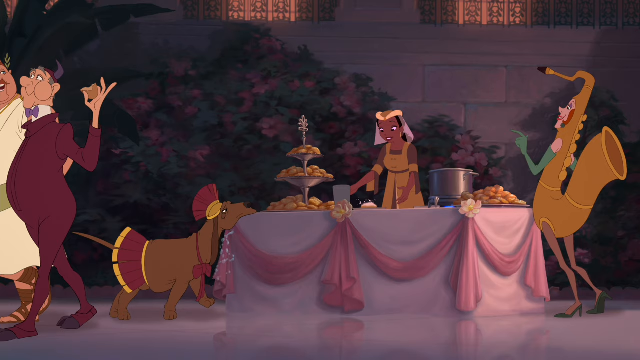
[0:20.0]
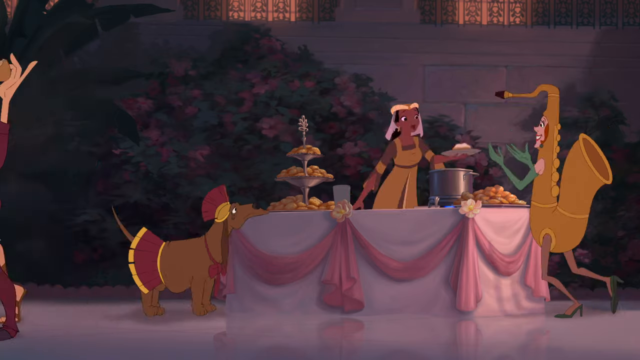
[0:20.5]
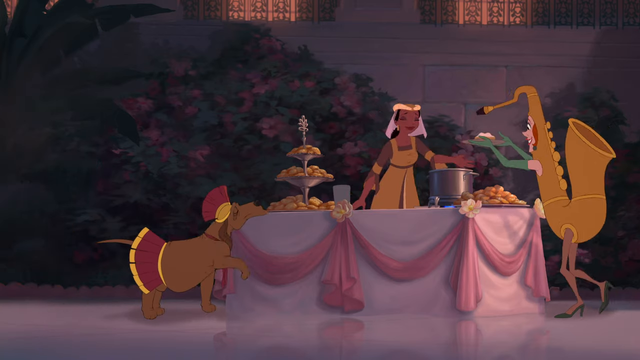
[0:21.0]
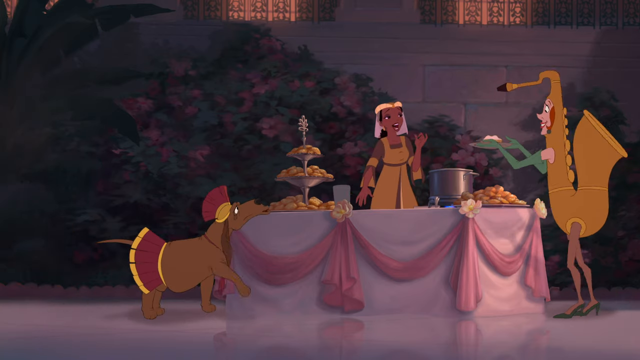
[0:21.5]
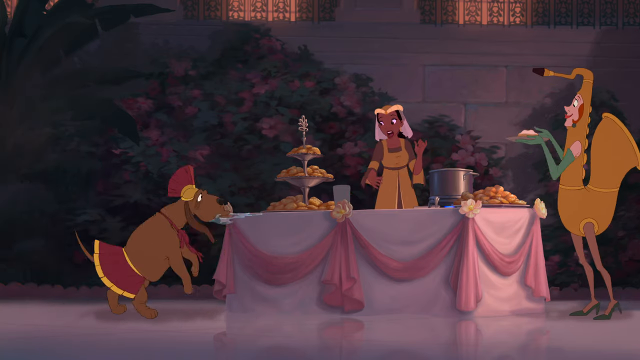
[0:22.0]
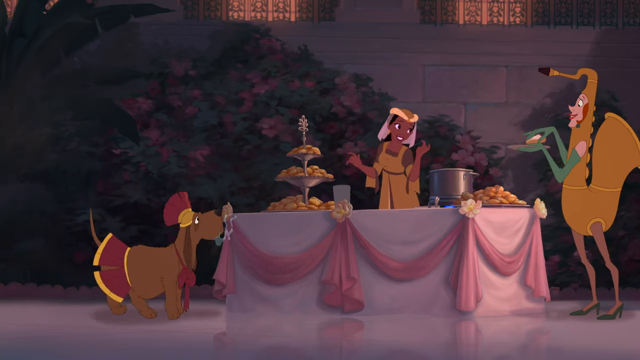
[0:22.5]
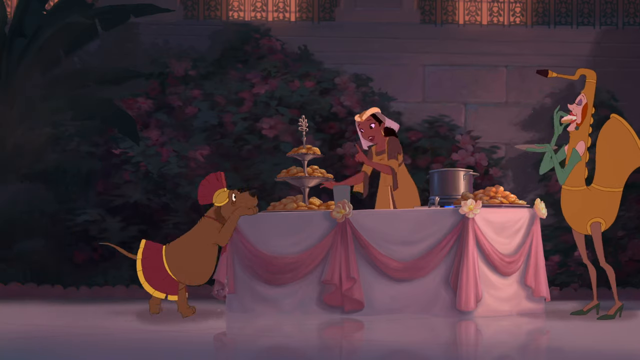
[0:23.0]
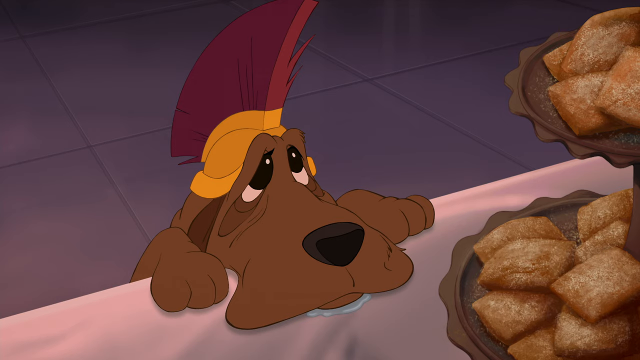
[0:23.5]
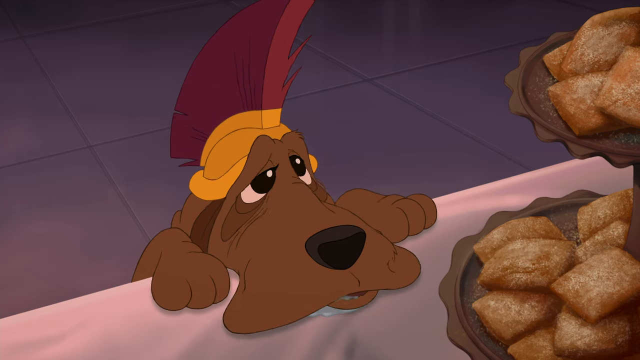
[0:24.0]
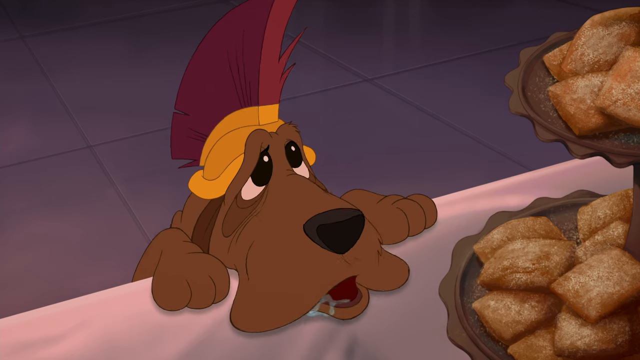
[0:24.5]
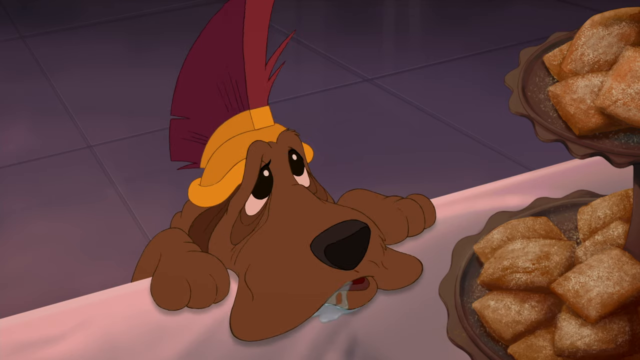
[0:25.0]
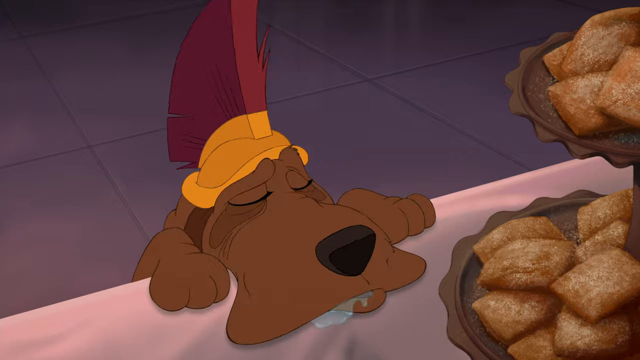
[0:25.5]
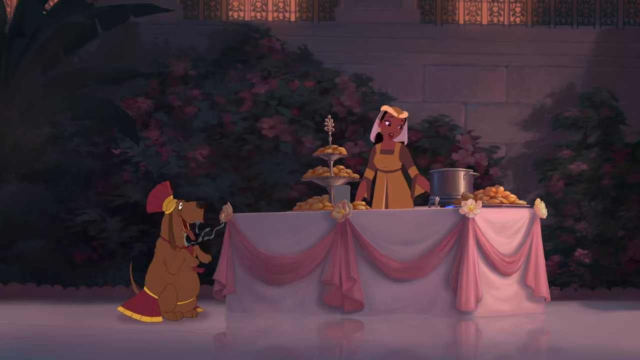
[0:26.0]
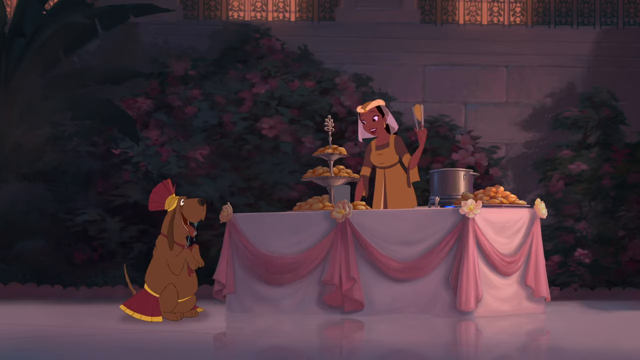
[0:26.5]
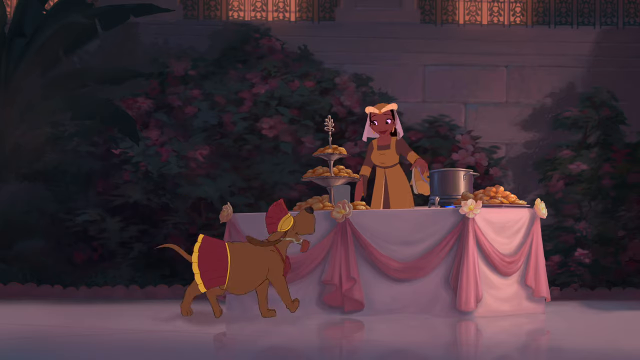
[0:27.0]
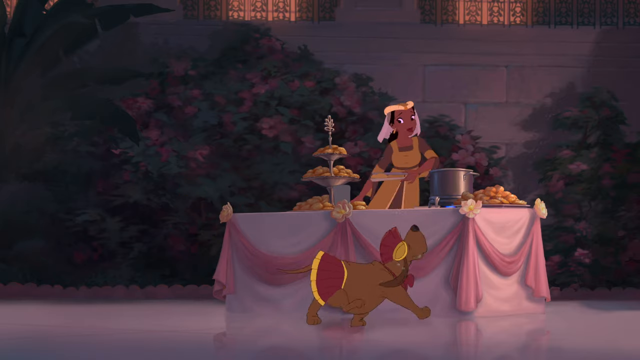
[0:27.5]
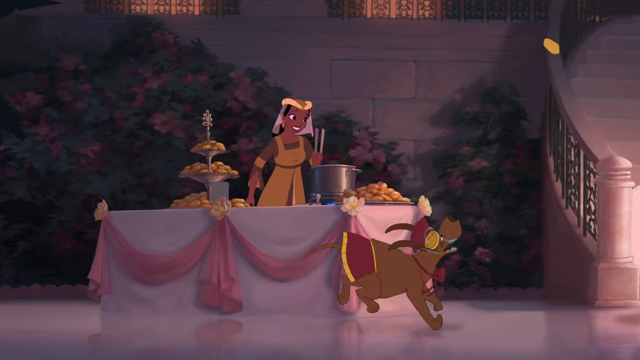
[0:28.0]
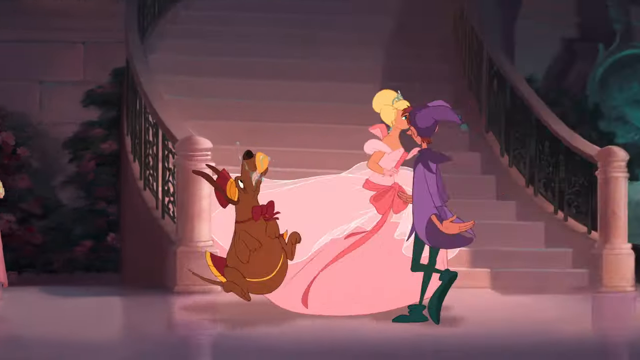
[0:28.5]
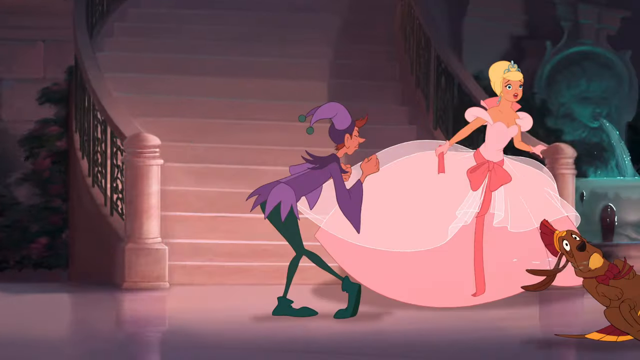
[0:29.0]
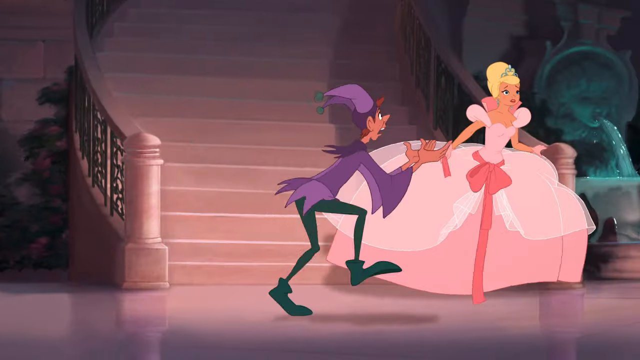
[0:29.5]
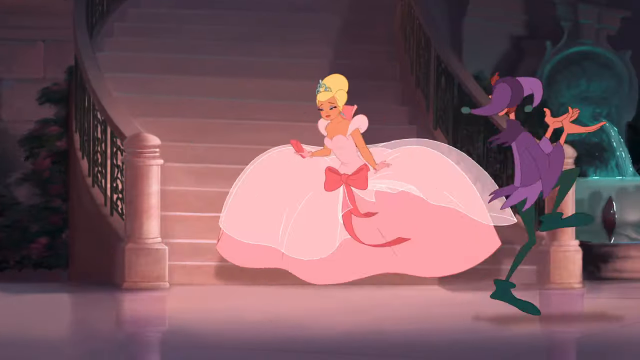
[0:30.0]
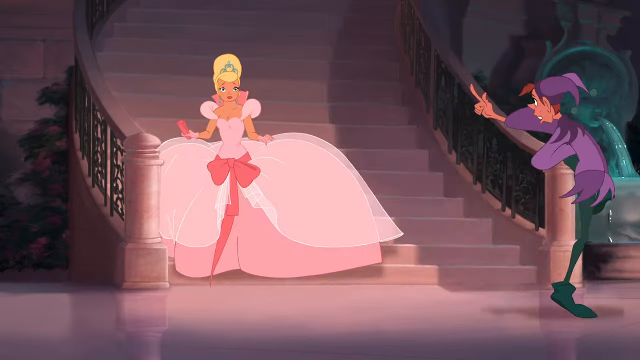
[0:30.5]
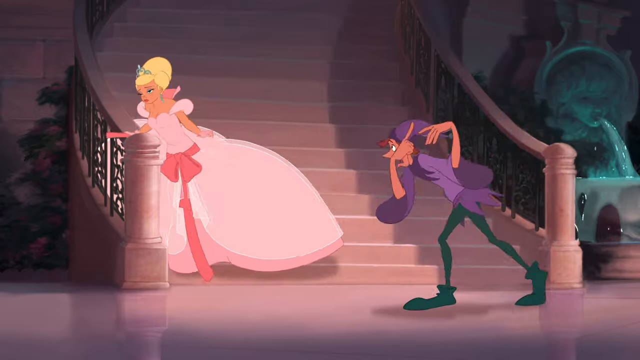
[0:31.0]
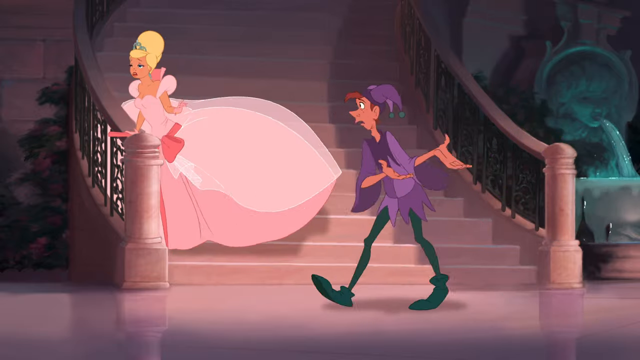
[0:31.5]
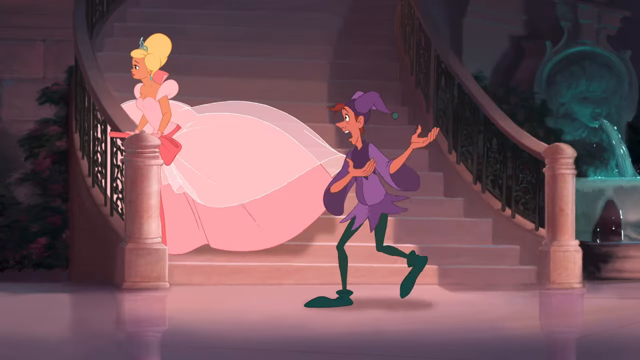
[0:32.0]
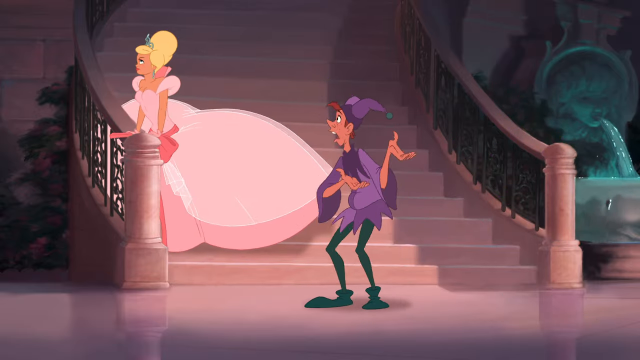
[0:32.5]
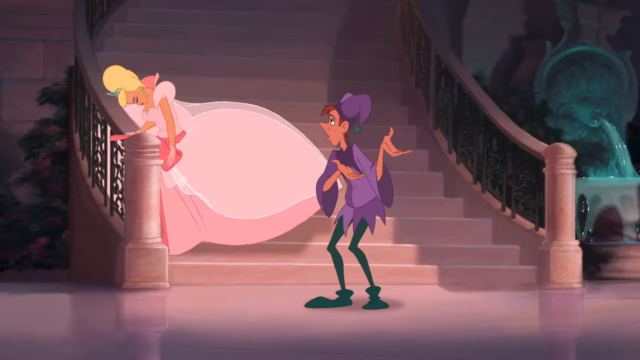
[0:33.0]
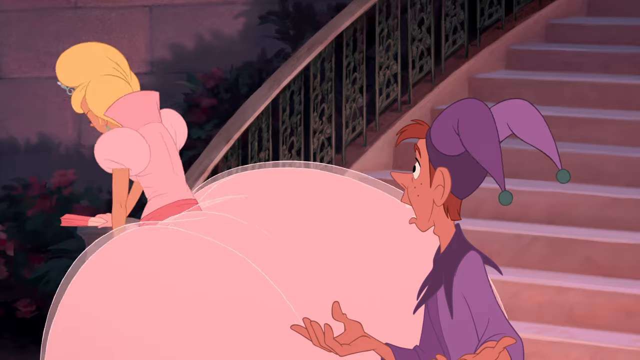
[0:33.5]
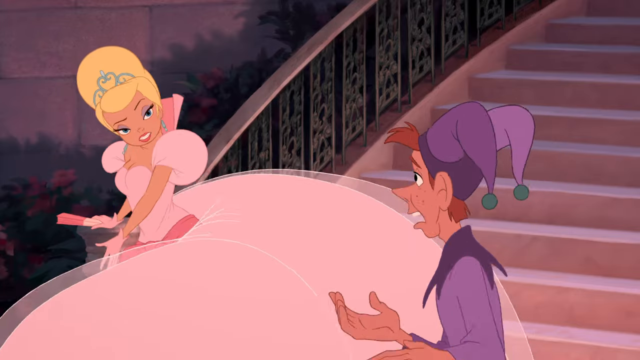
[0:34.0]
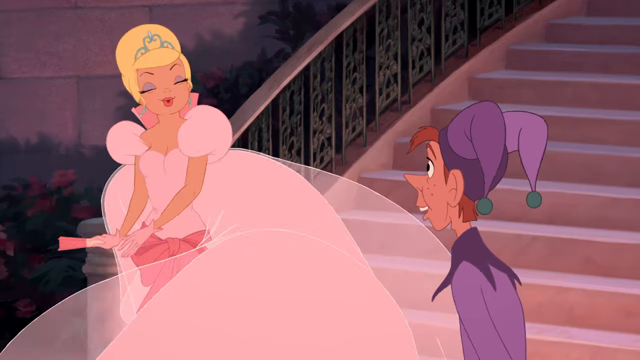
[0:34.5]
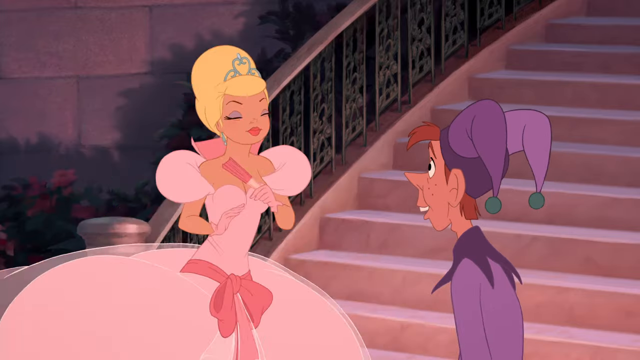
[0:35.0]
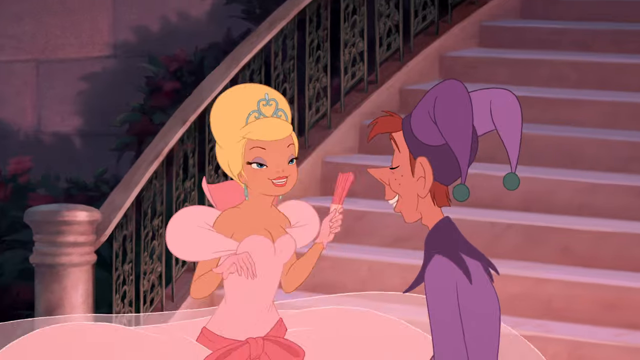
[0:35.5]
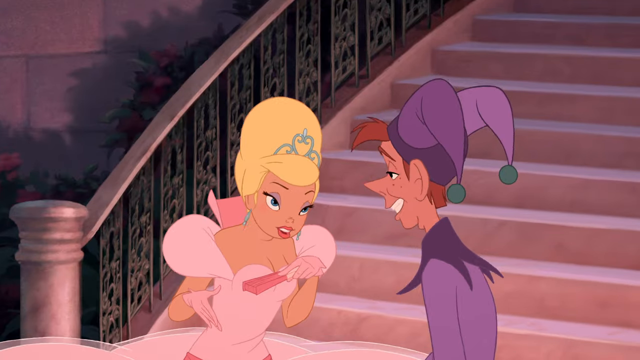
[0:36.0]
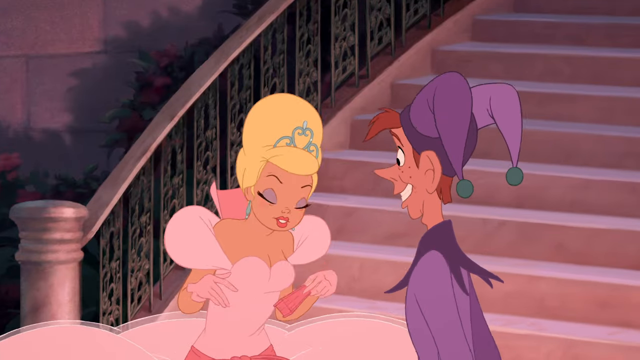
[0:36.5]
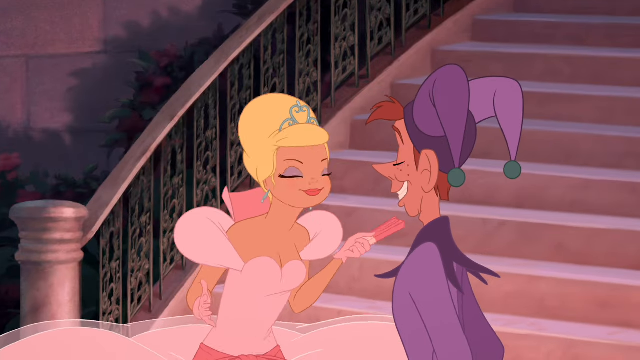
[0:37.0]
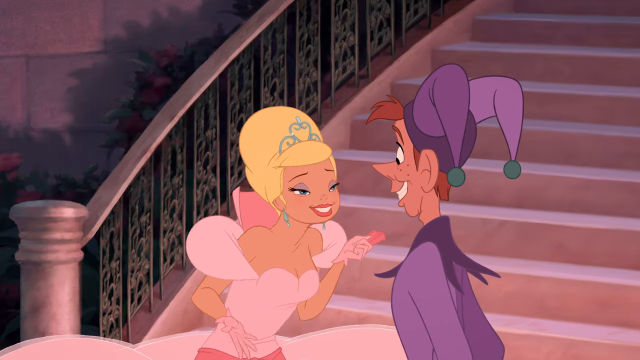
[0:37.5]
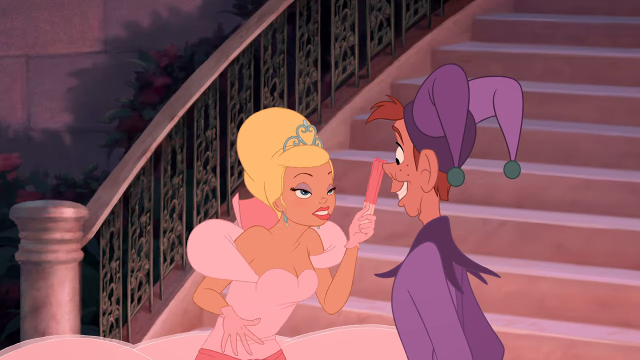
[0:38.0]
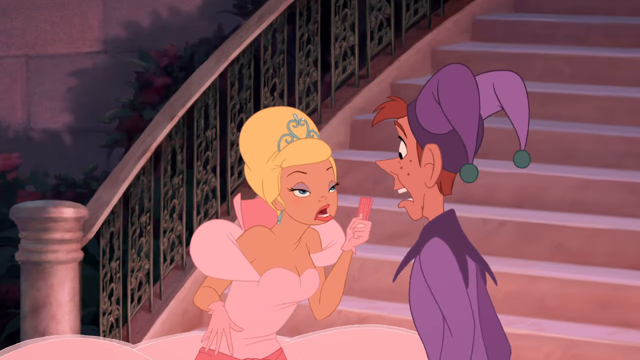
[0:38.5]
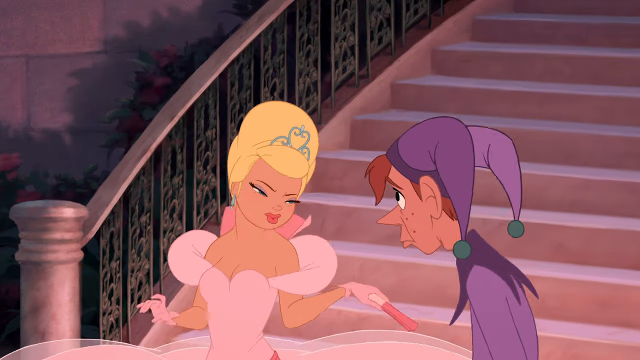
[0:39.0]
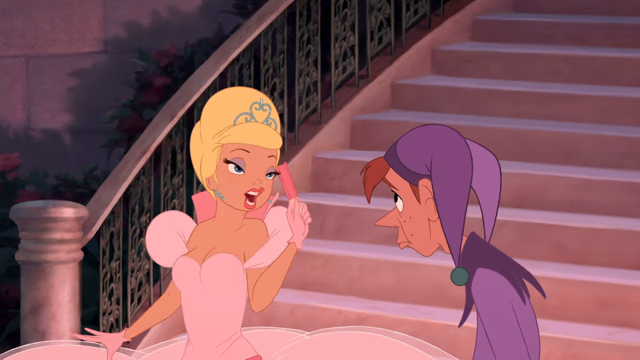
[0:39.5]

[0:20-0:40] Someone dressed as a saxophone walks up to the drink table. Off to the left of the table, a dog dressed as a Roman warrior tries to steal food. A woman behind the table serves food and drink; she tosses a treat and the dog runs off. Next, a jester dances with a very pretty woman in a large pink ball gown, her hair in an updo like Cinderella's. The jester shakes his hands back and forth as the woman walks a little way up the stairs, but she drops her head and turns over her shoulder toward him, talking angrily. Then her attitude changes: she turns toward him and walks toward him smiling, holding a closed fan in her hand. She then looks at the jester disdainfully as she turns to the stairs again to walk away from him.